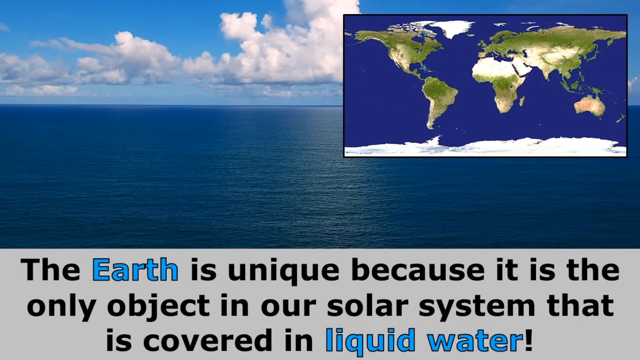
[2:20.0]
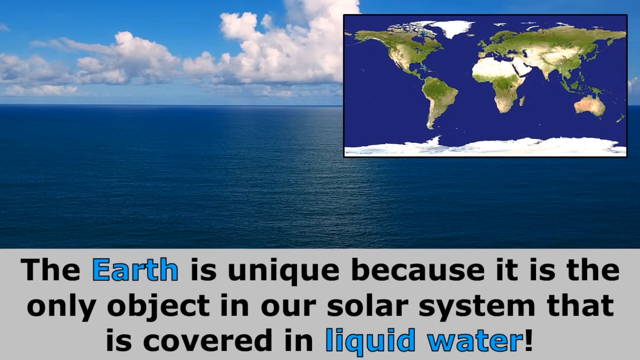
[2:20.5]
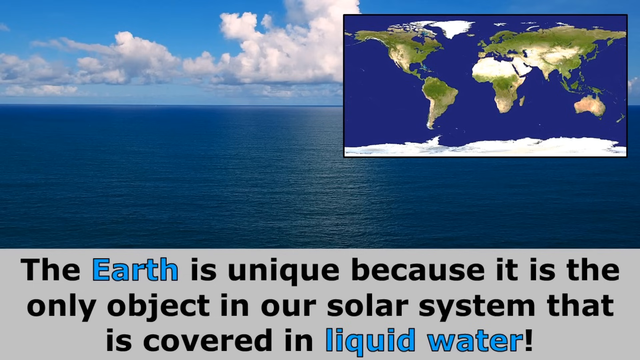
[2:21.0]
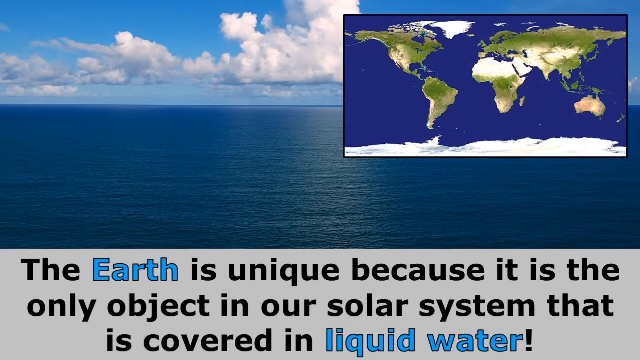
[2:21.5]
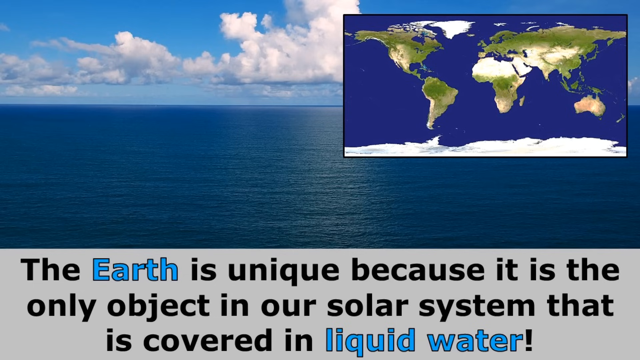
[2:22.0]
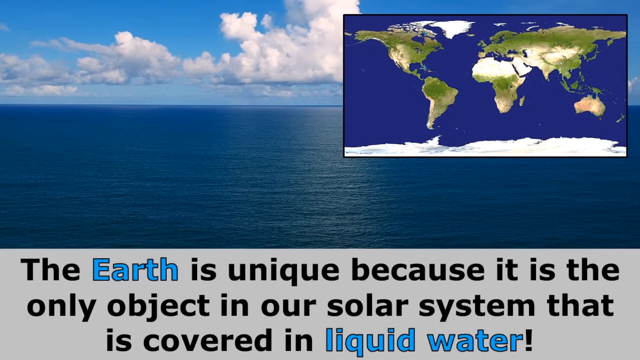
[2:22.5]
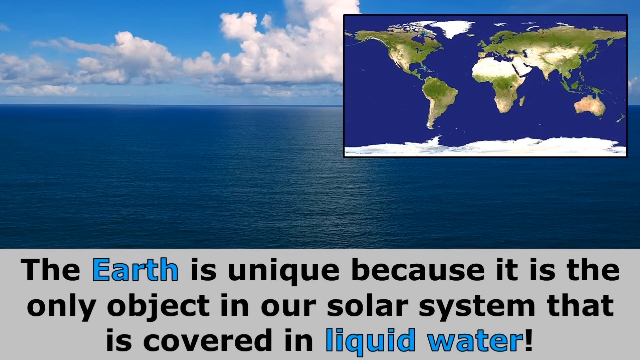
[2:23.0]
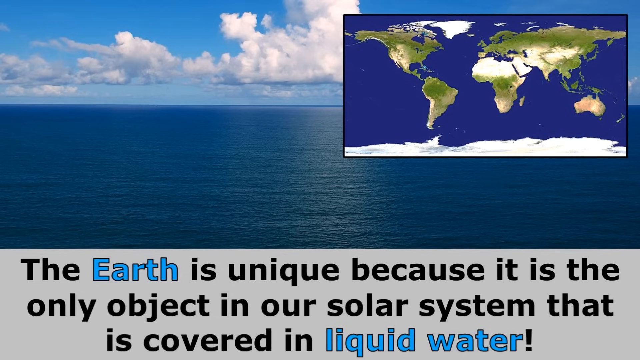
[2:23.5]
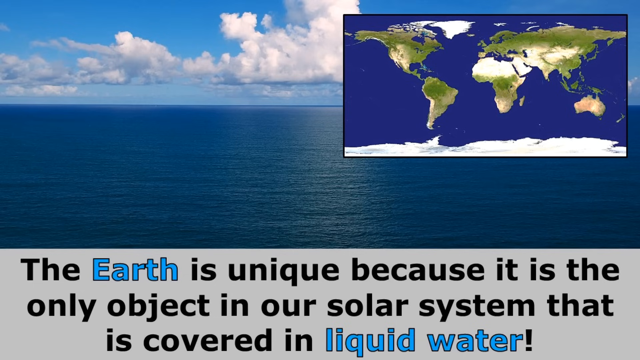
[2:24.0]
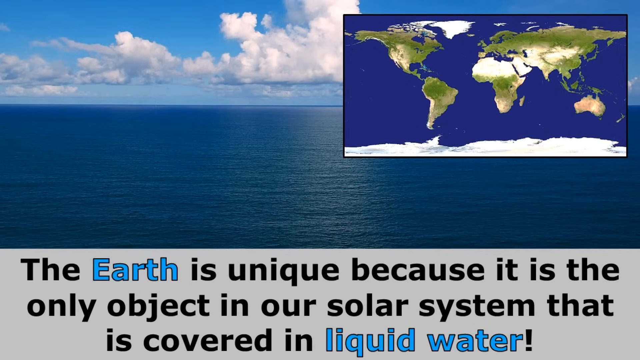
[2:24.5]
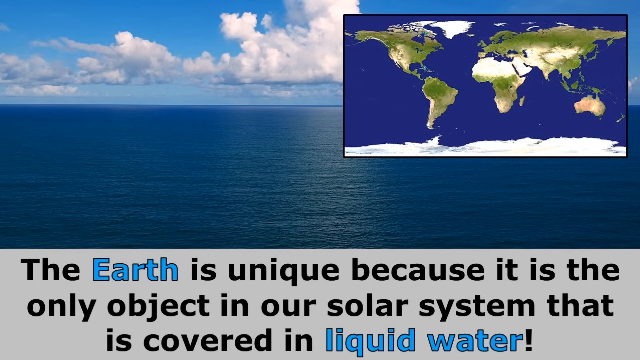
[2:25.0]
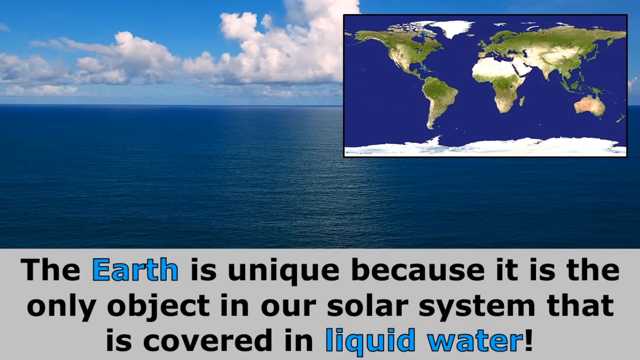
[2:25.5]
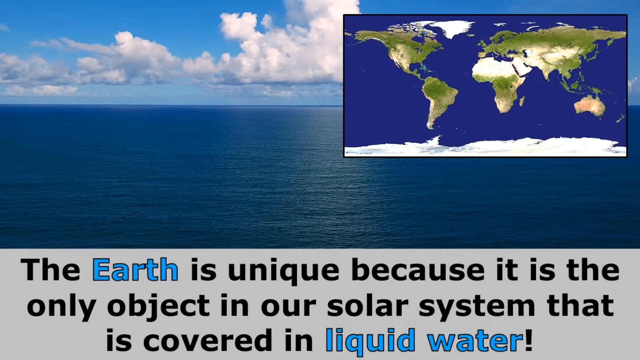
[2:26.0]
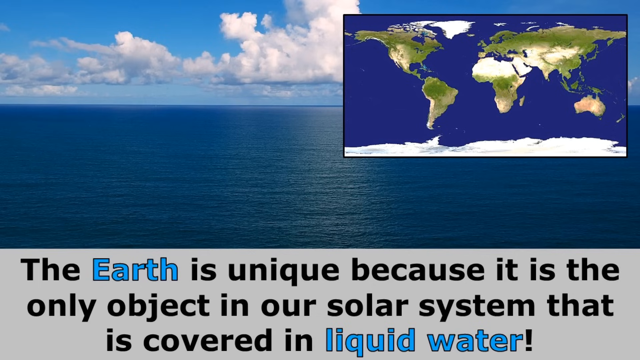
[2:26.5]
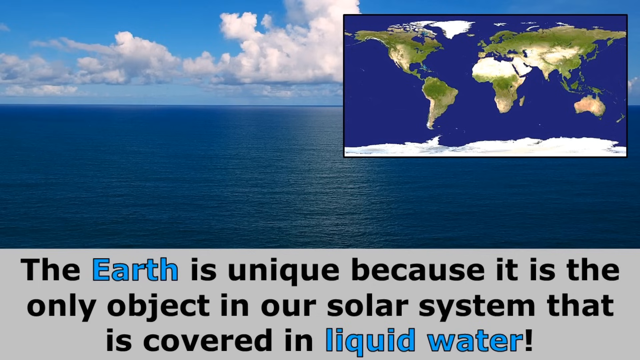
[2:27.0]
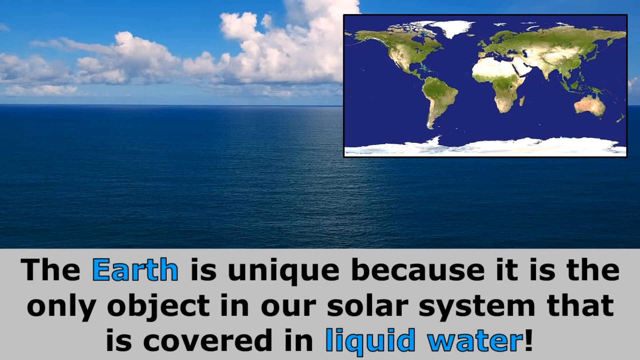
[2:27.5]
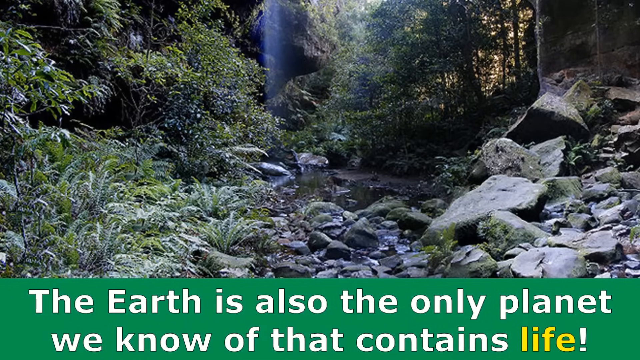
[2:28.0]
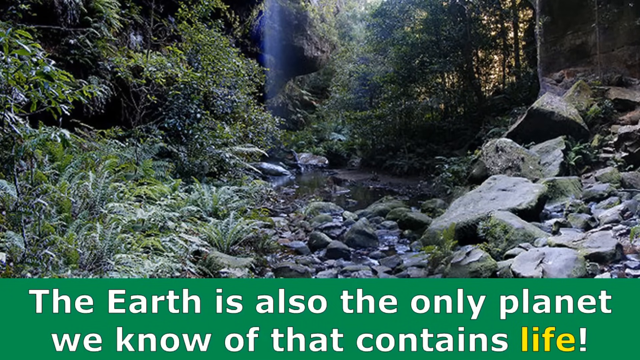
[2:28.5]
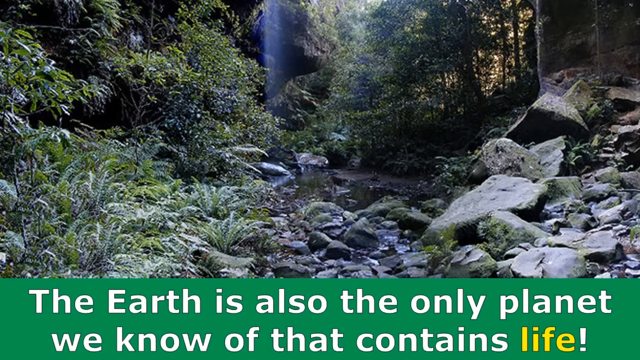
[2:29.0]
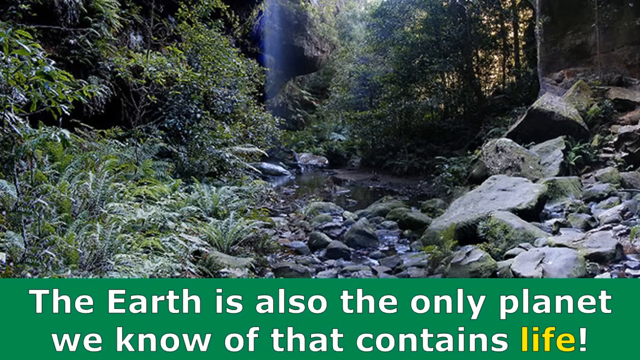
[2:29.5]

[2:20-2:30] The same 3D-modeled ocean and the same bottom text remain. At the top right is a map of the whole world showing the large amount of water on the planet along with the landmasses of the continents; there is not much else in the picture. Near the very end, it transitions to another picture with white text on a green horizontal background reading "the Earth is also the only planet we know of that contains life."